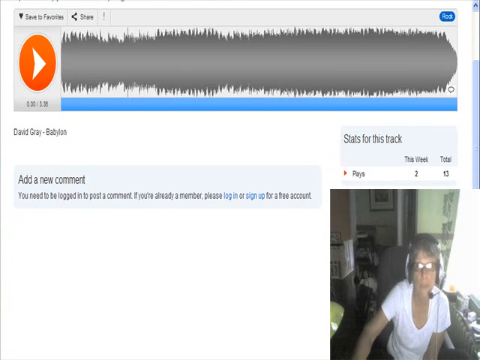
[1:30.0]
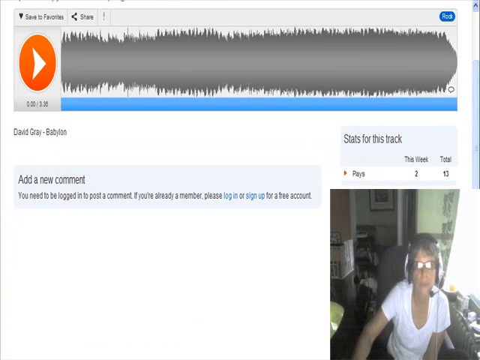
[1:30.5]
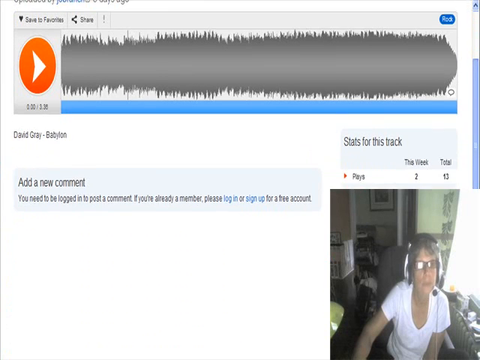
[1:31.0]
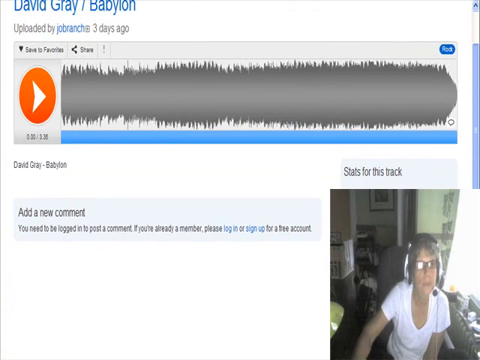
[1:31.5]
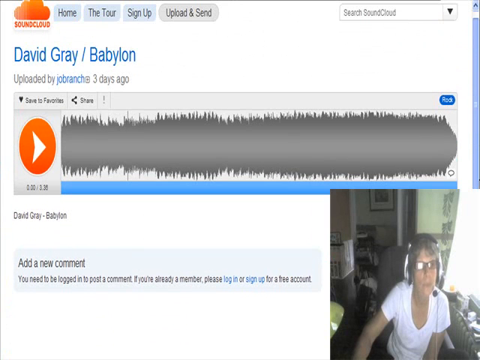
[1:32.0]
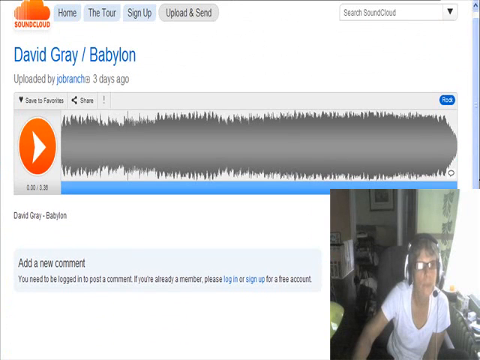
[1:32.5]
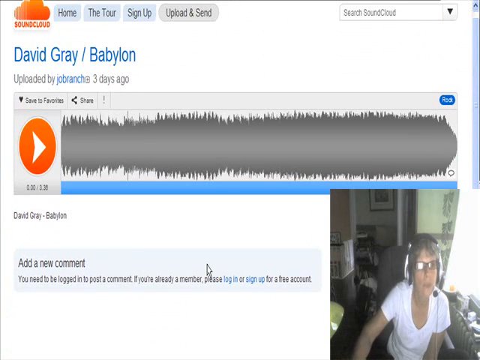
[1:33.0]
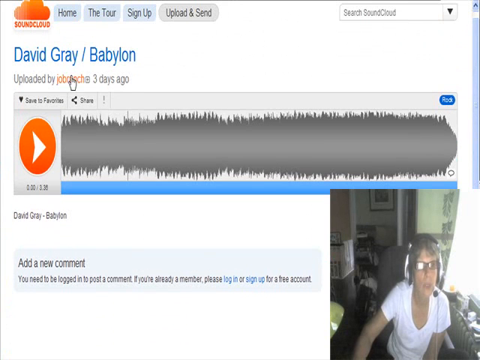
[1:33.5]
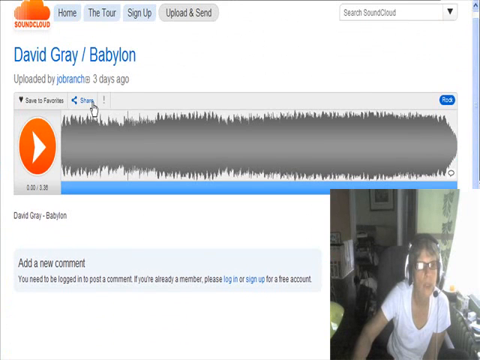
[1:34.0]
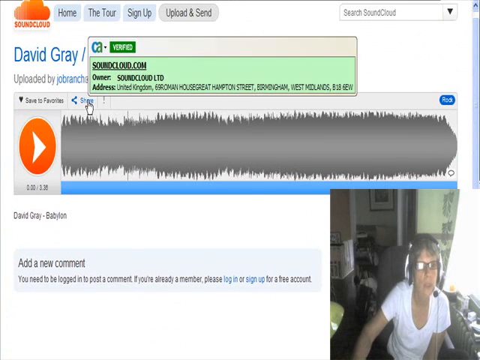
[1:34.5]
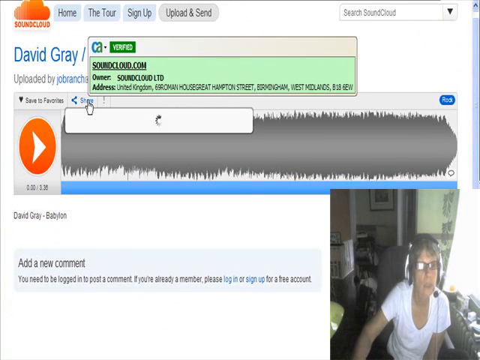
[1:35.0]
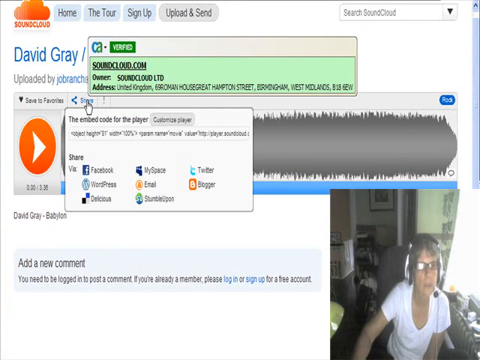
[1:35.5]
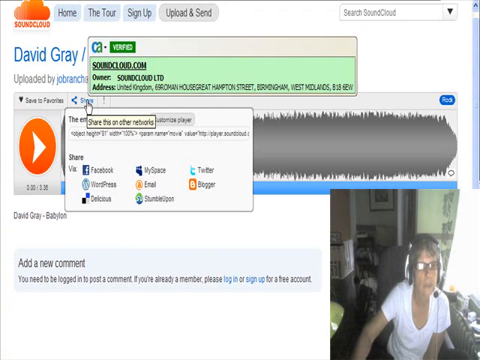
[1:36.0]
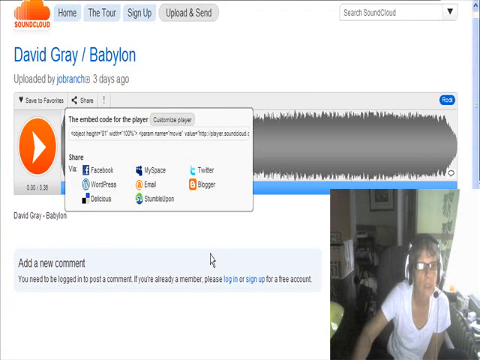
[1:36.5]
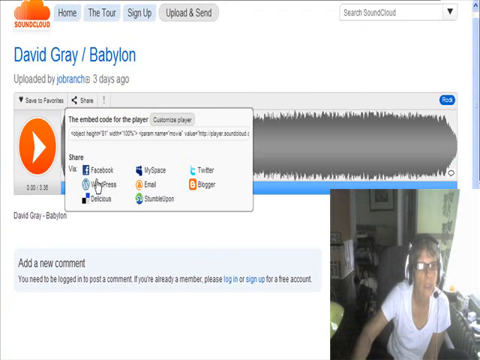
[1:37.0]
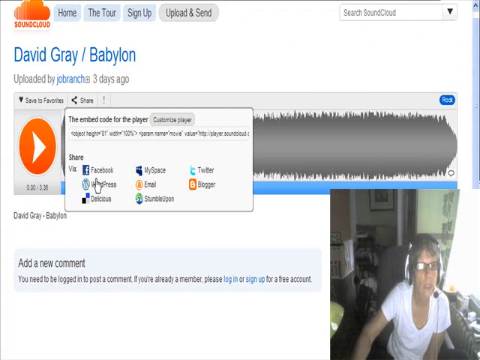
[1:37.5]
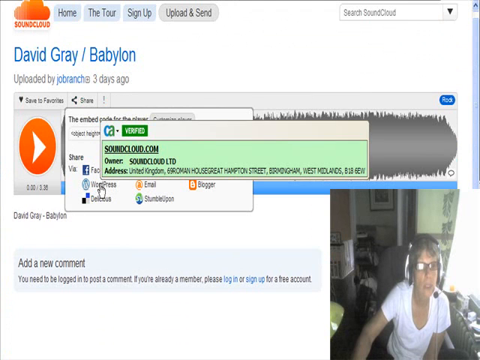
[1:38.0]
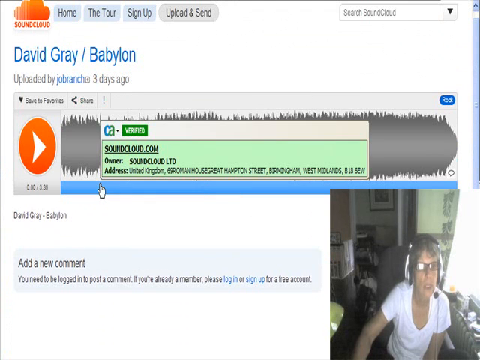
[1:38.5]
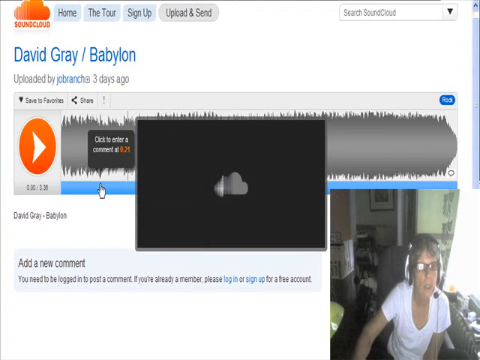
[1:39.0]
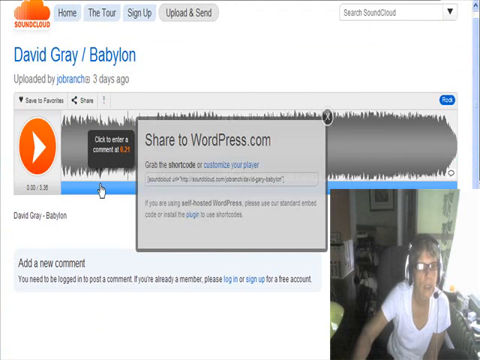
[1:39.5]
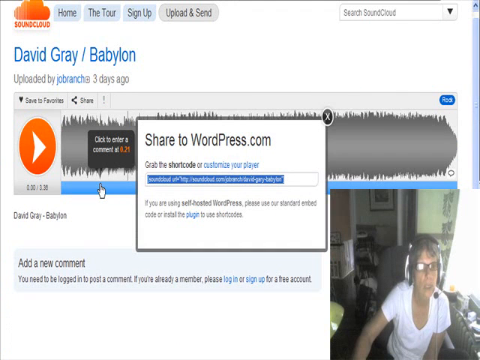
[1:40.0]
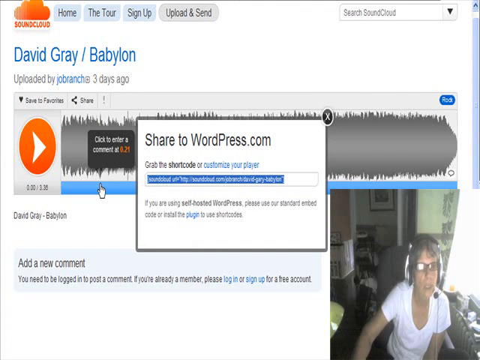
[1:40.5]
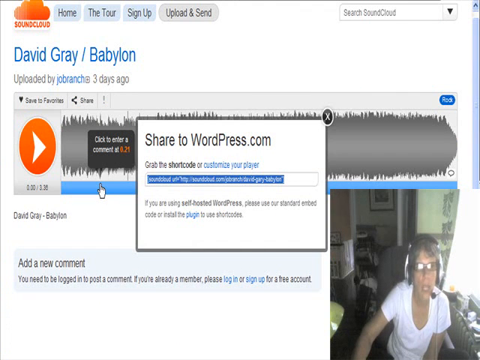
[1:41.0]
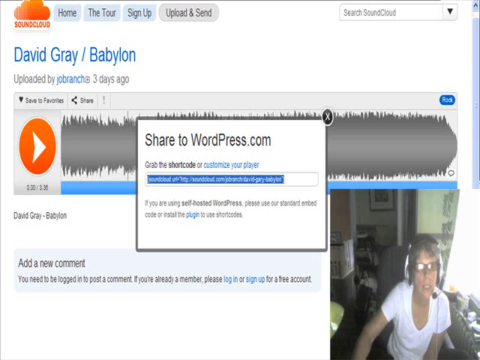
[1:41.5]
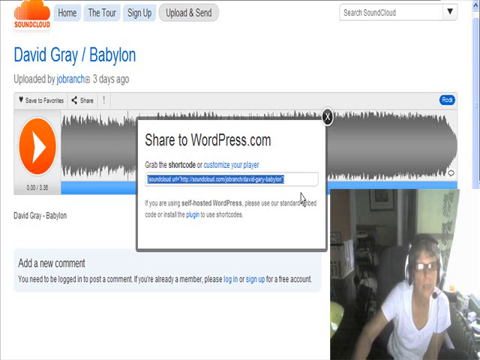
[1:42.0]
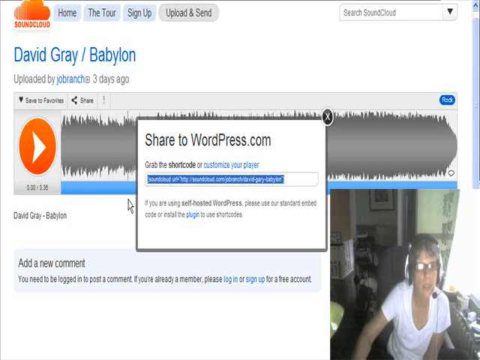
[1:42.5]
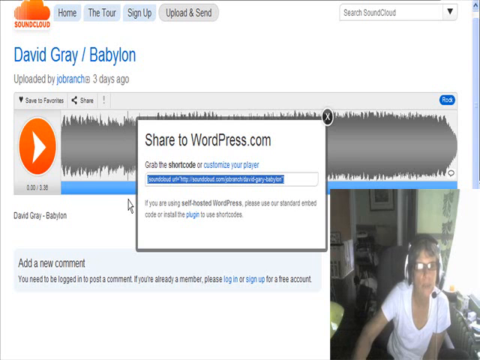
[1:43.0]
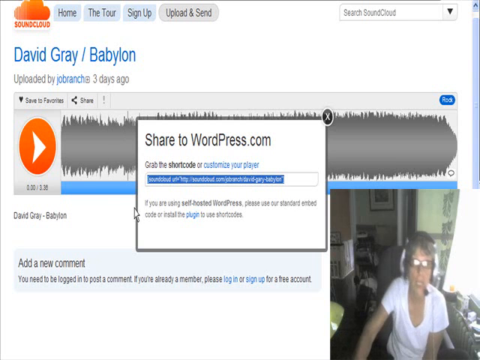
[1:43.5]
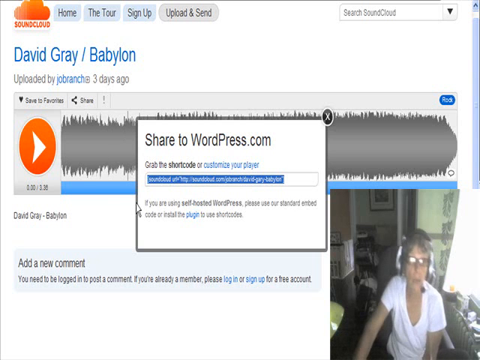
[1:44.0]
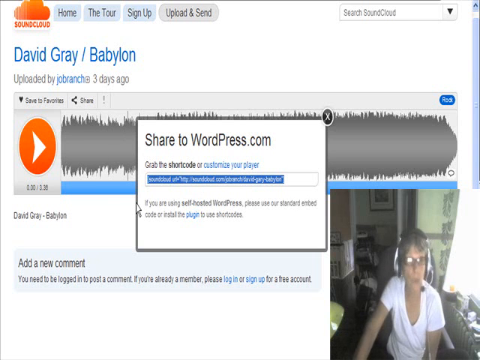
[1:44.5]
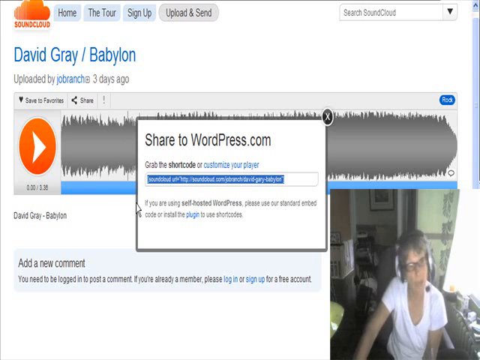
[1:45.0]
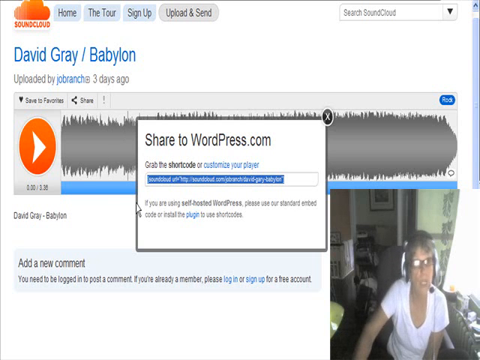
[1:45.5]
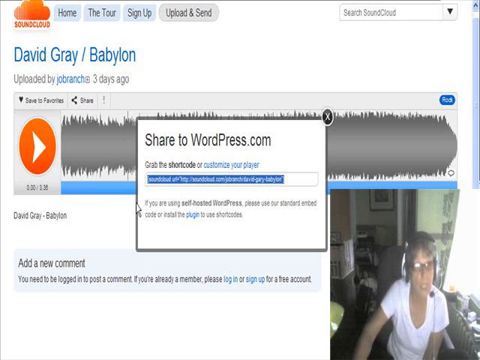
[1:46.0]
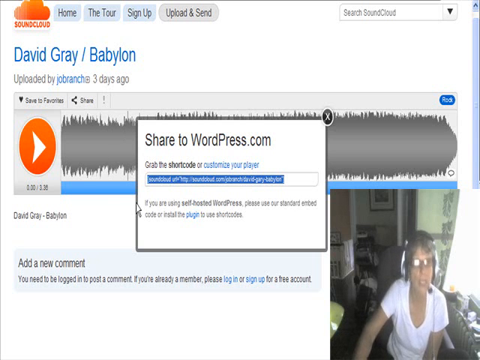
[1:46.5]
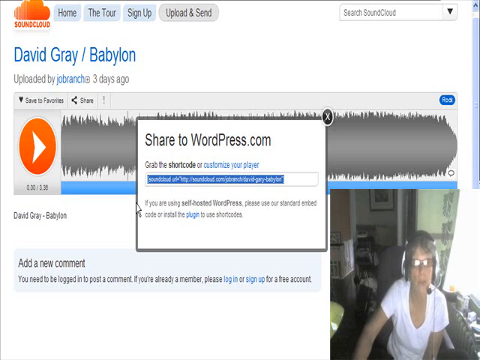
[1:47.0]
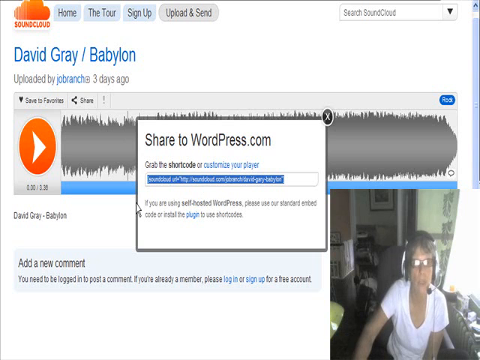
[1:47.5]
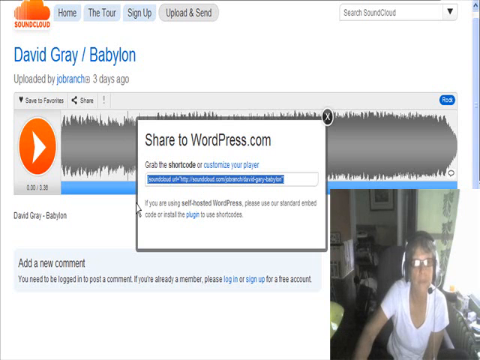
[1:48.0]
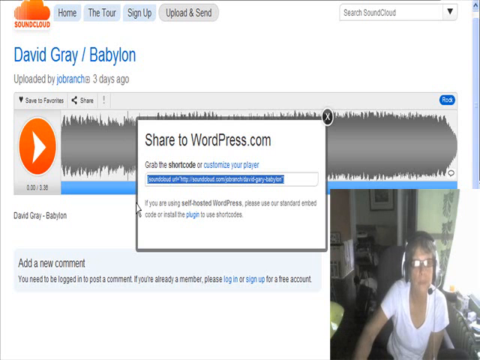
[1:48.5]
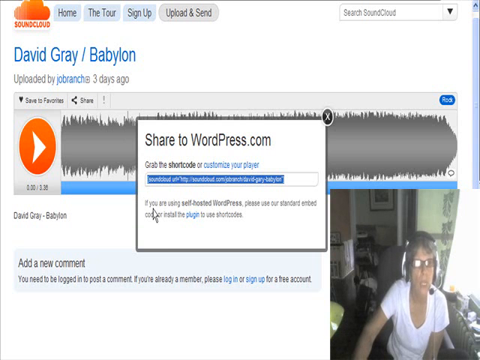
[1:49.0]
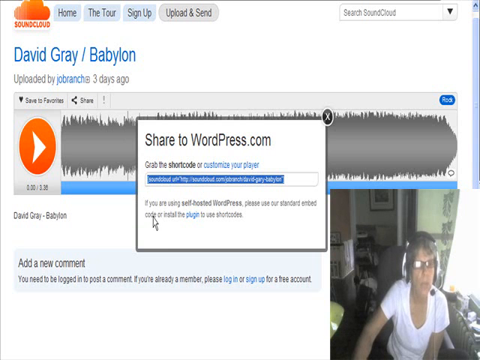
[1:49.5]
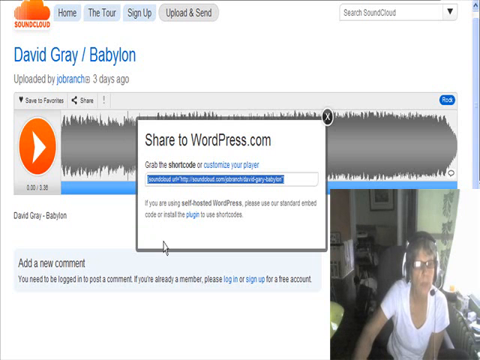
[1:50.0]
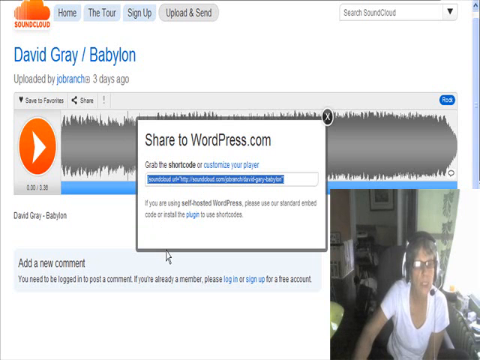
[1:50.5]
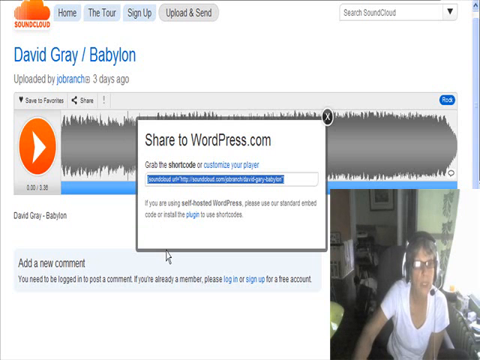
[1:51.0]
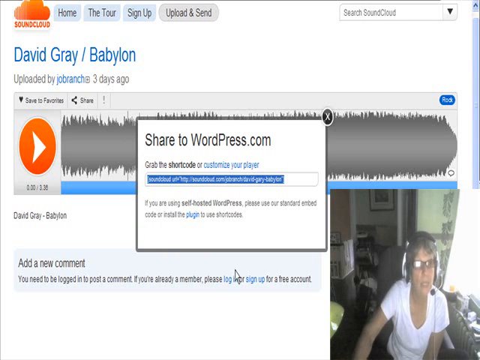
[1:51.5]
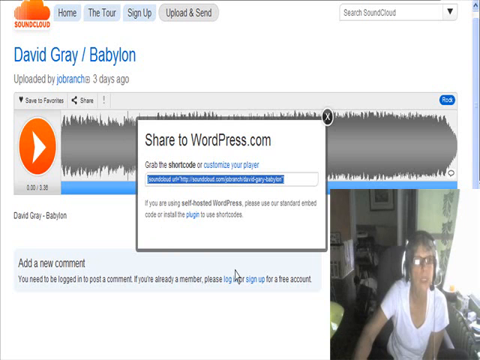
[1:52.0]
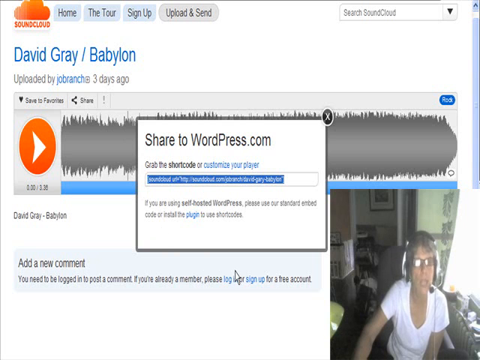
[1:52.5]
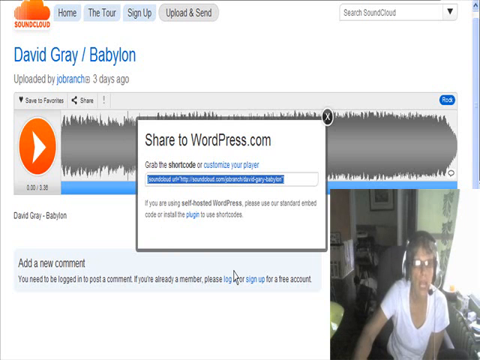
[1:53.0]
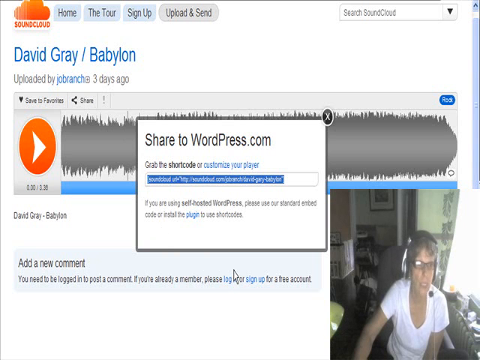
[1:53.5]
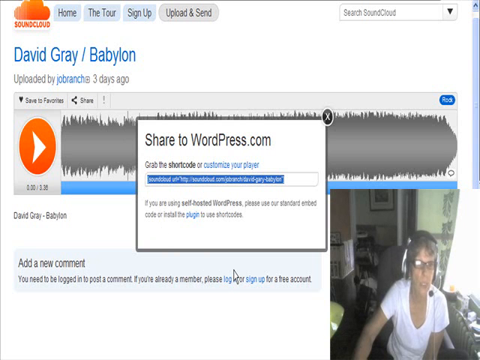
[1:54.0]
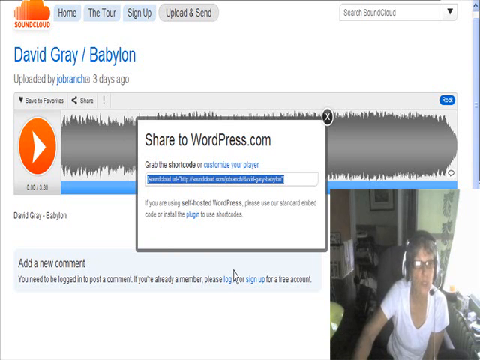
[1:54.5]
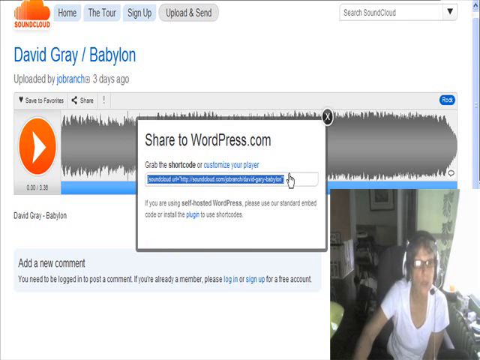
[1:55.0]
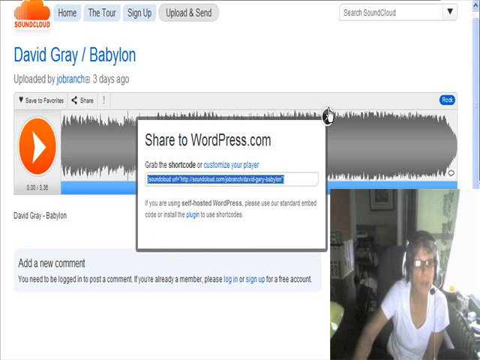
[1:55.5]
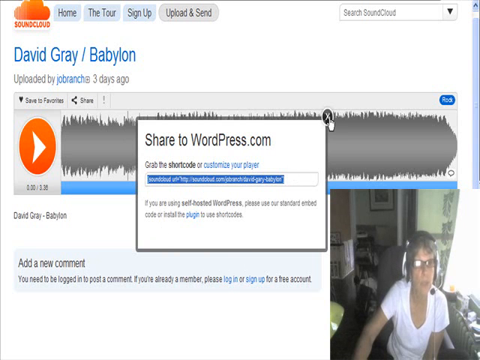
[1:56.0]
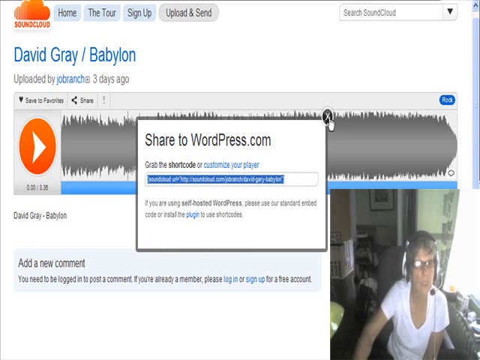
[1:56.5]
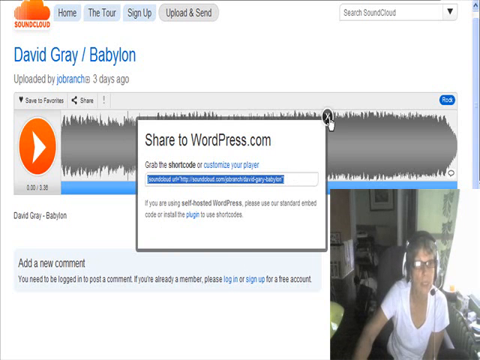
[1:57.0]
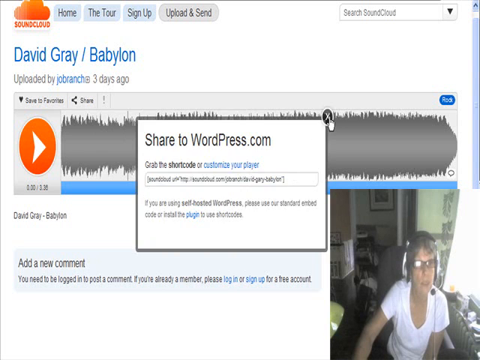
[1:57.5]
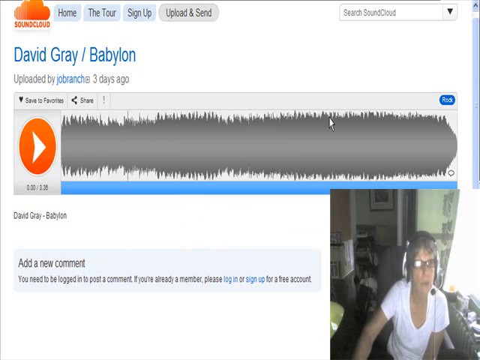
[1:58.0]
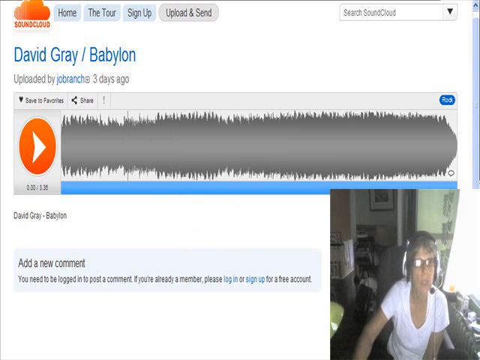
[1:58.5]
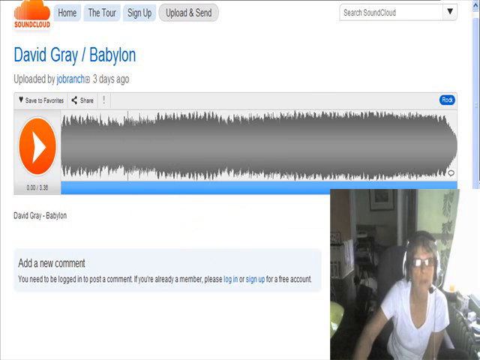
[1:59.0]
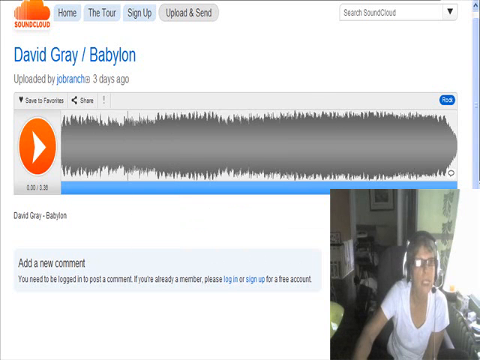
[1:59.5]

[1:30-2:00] Facing forward, the woman moves her head slightly to the left and hovers her mouse over the Babylon area of the screen. A small window with a white background opens, containing several selectable icons. Her mouse hovers over the second item down in the first column, and the green soundcloud.com box opens. After that is clicked, another small box opens in the center of the screen, with an X in the upper right-hand corner, reading "share to WordPress.com," and apparently also "share the shortcut," with a text box highlighted in blue. She looks slightly left and right as she moves her mouse over the box. She leans slightly forward, draws her right shoulder up toward her head, leans back, scrolls her mouse down beneath the box, then moves up to the X in the upper right-hand corner and clicks it to close the box.